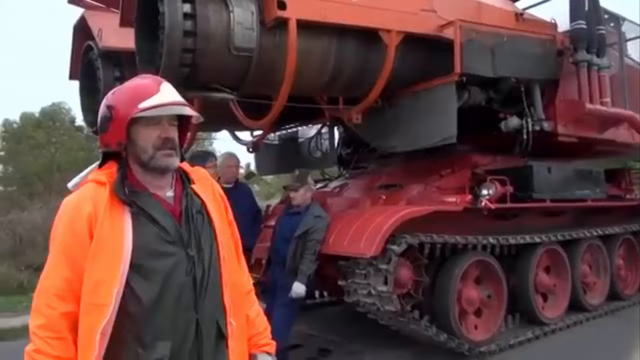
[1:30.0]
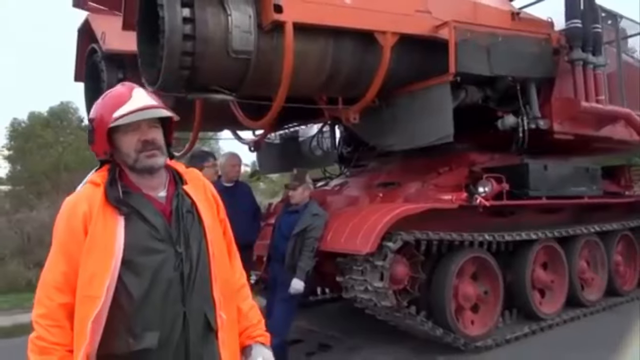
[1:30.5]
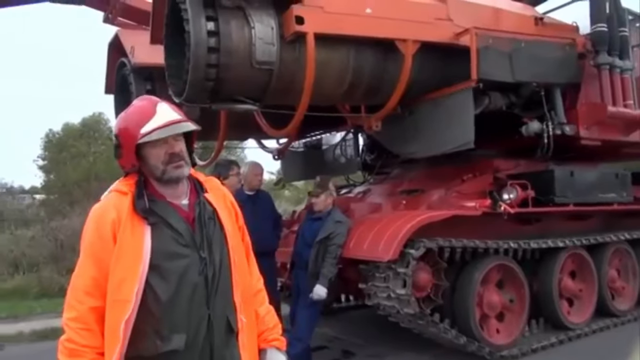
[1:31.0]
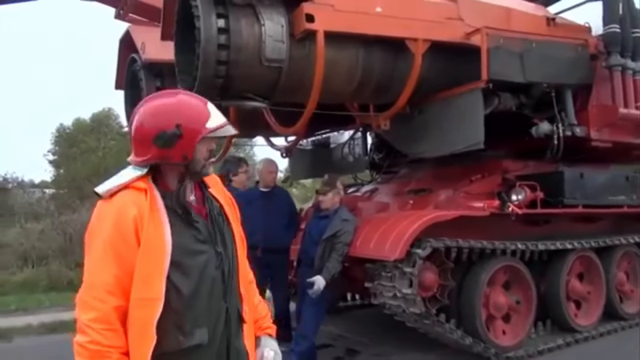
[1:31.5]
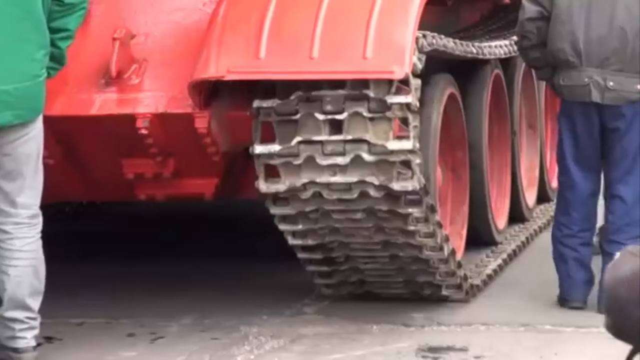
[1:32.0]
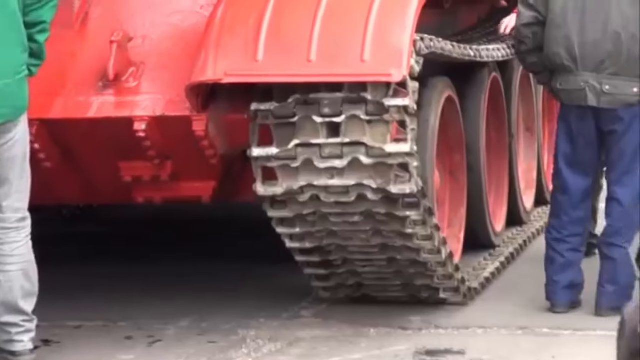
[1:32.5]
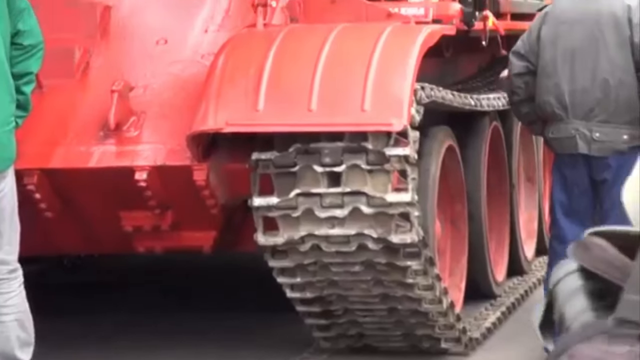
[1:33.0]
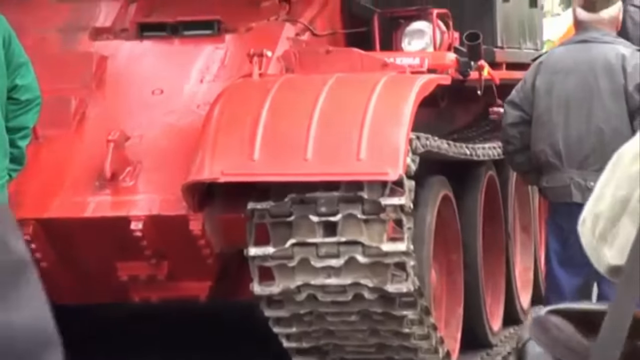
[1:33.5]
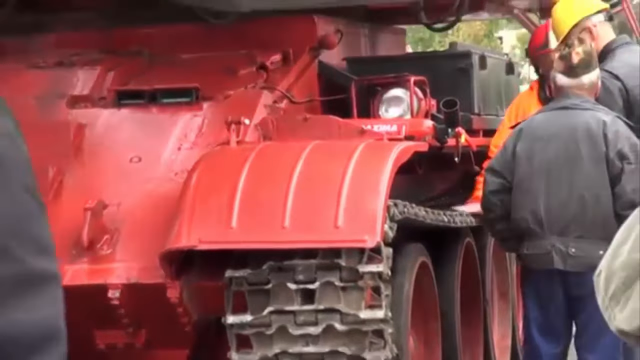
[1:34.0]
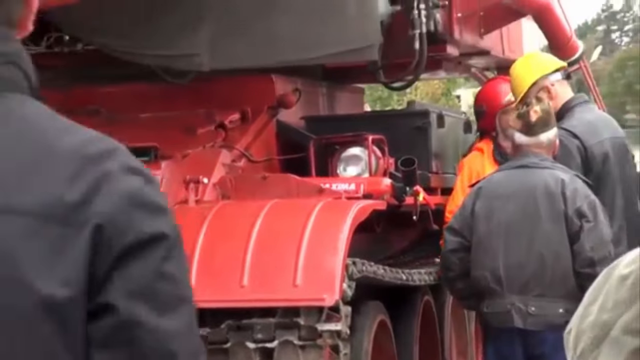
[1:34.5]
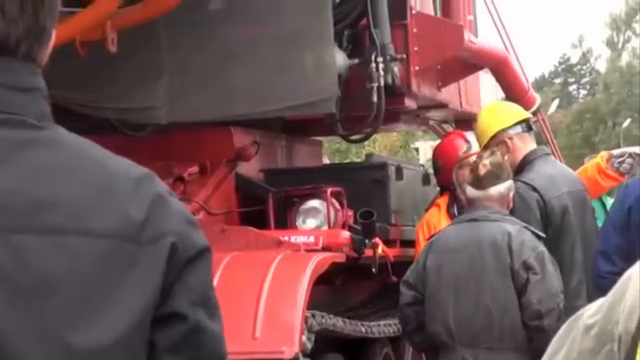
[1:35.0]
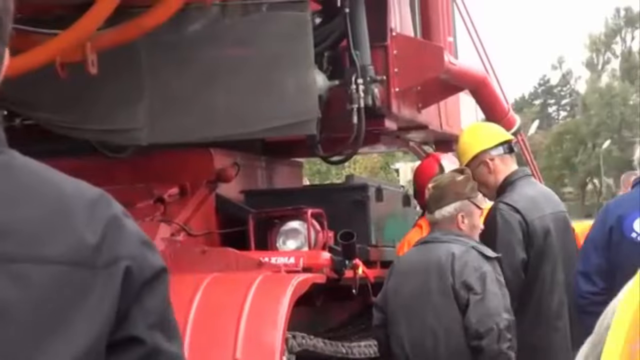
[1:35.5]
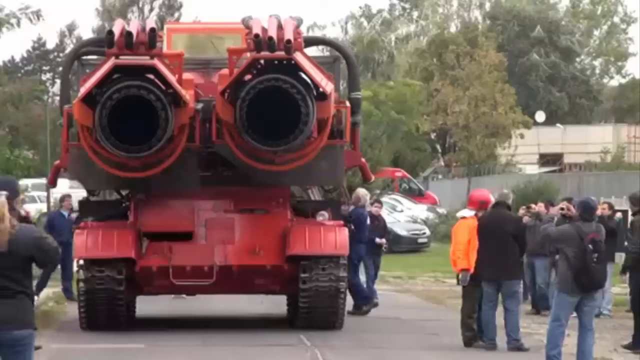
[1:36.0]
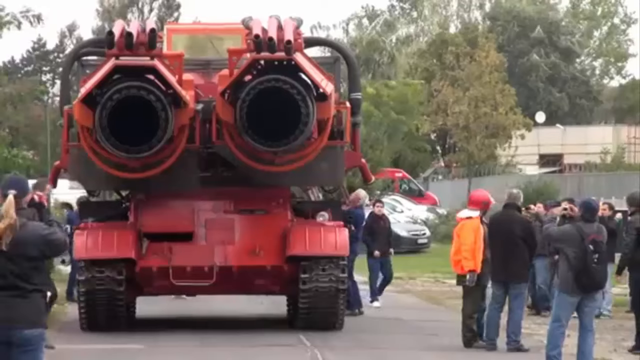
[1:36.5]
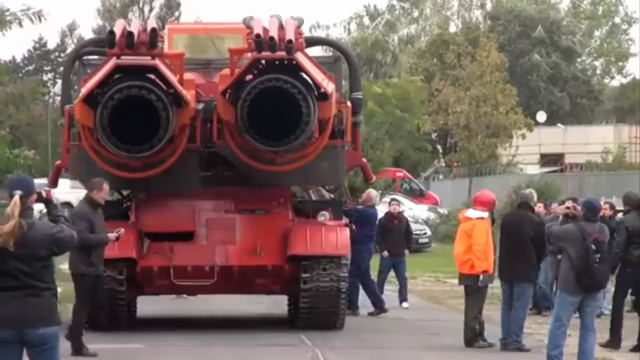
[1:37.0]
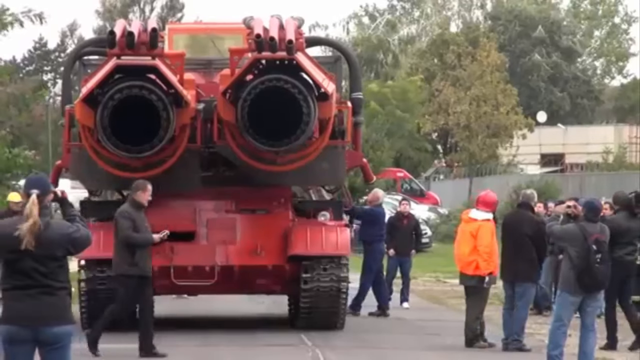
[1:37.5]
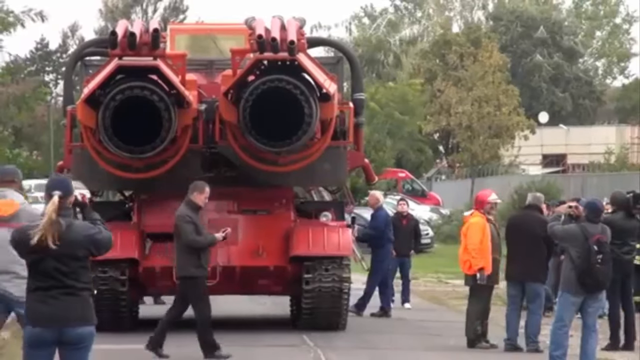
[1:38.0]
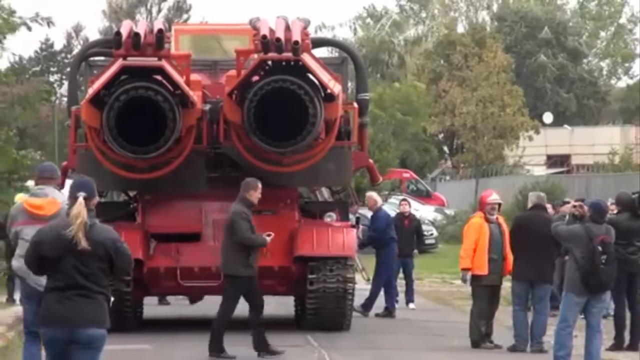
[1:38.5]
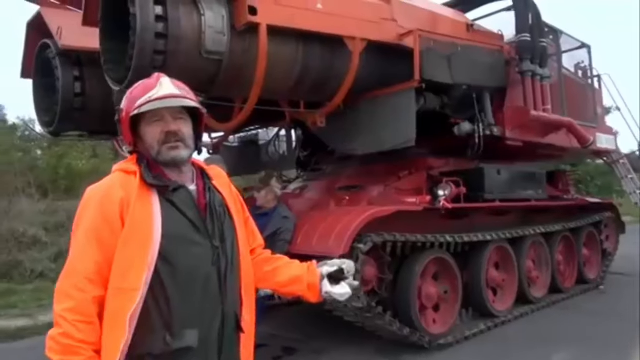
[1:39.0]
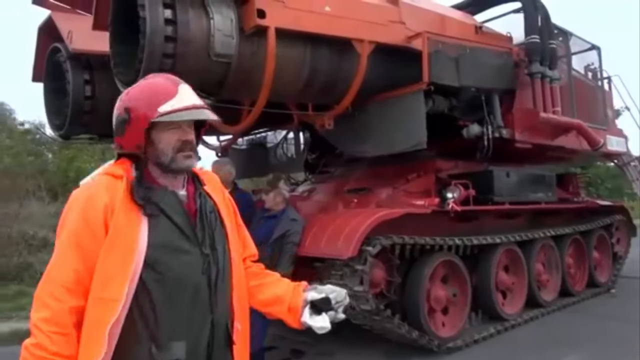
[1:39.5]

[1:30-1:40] There are a lot of people, and some of them are maintaining the firefighting vehicles. One seems to be a tank or something similar, with a water canal visible, maybe one from which a lot of water can be fired at the same time. It is huge.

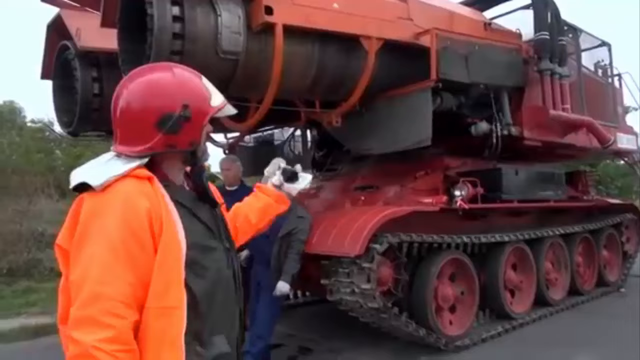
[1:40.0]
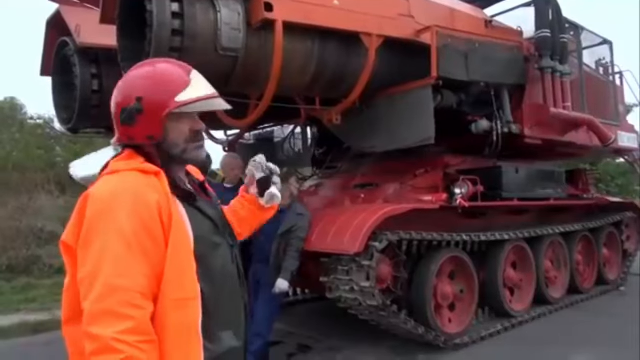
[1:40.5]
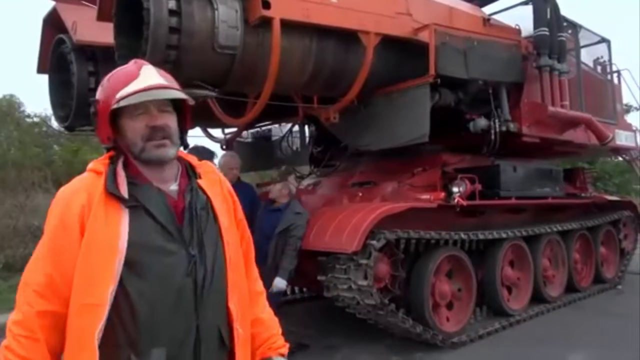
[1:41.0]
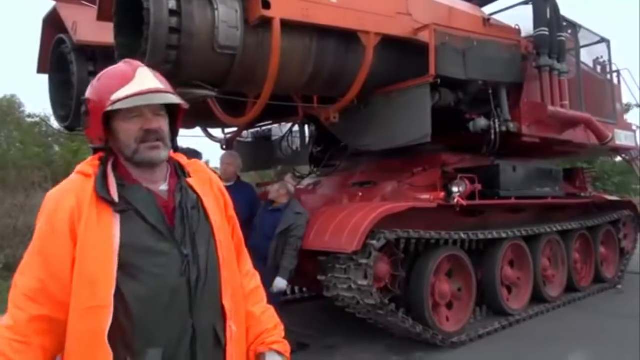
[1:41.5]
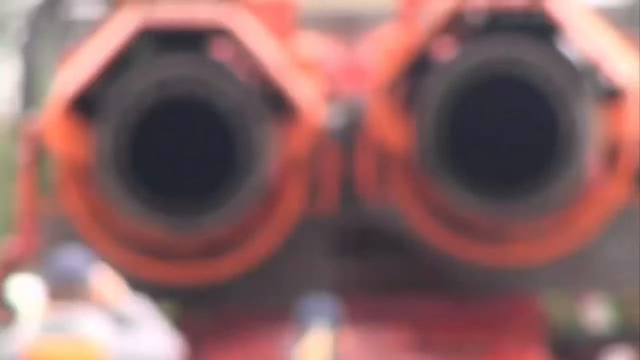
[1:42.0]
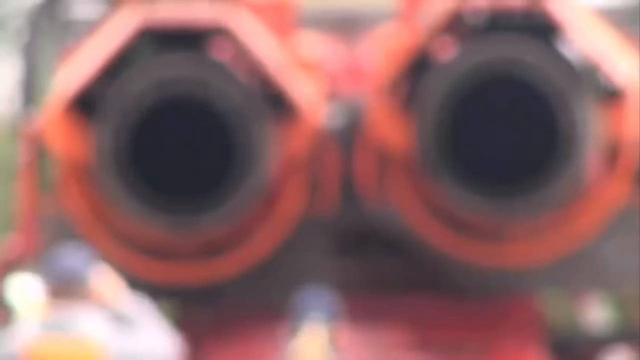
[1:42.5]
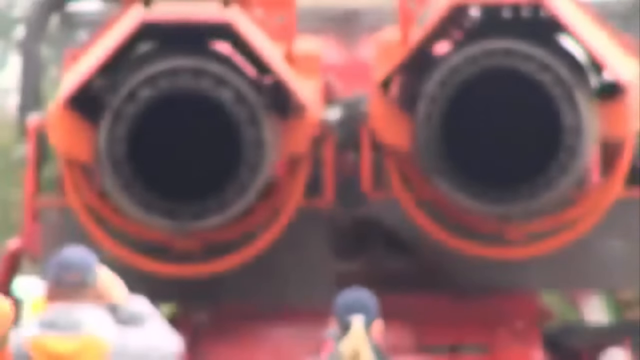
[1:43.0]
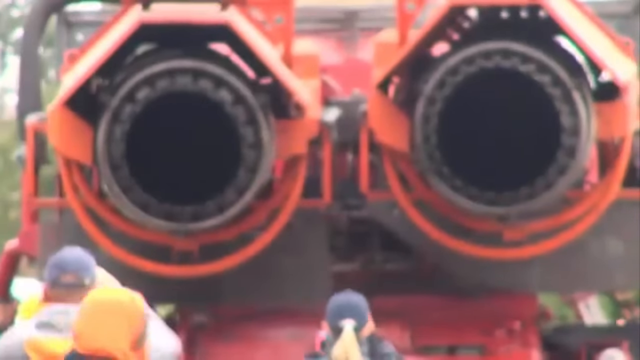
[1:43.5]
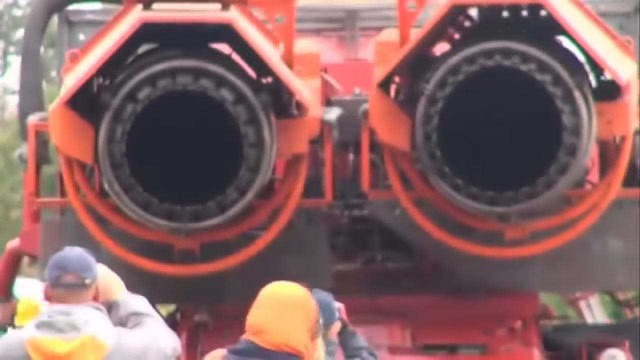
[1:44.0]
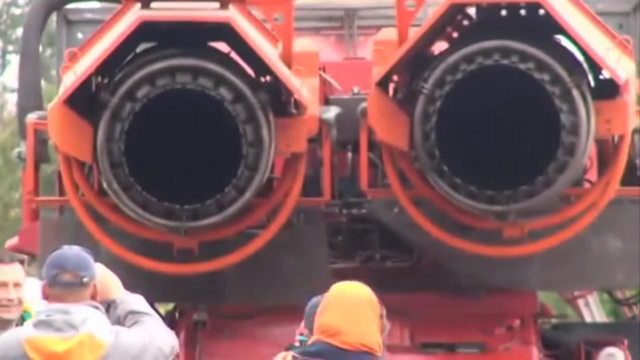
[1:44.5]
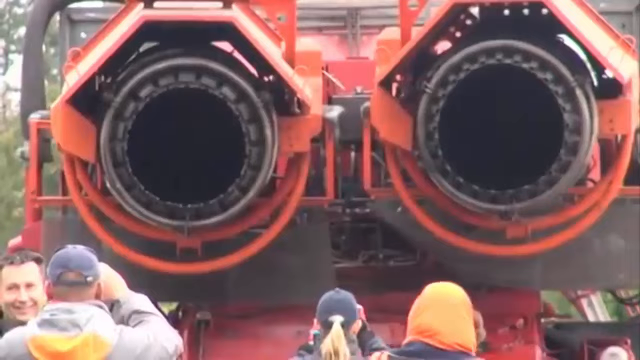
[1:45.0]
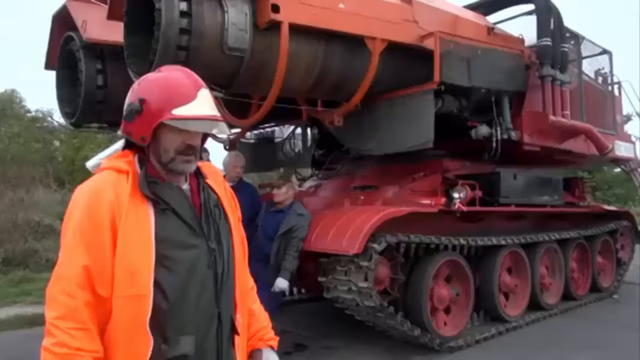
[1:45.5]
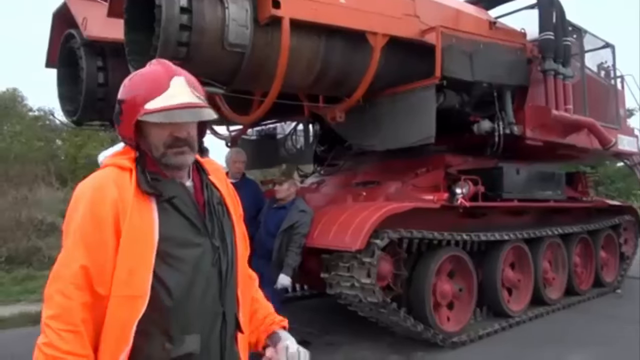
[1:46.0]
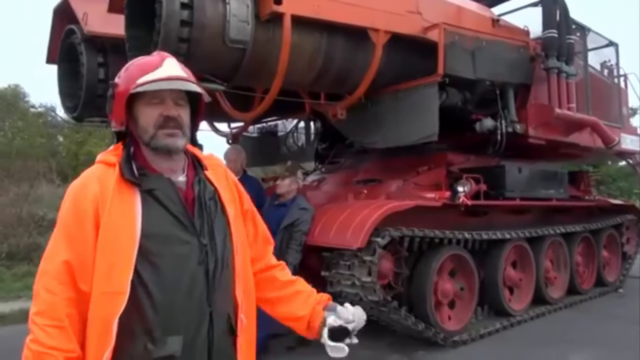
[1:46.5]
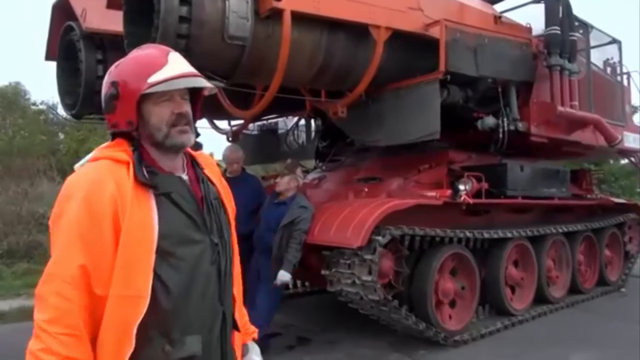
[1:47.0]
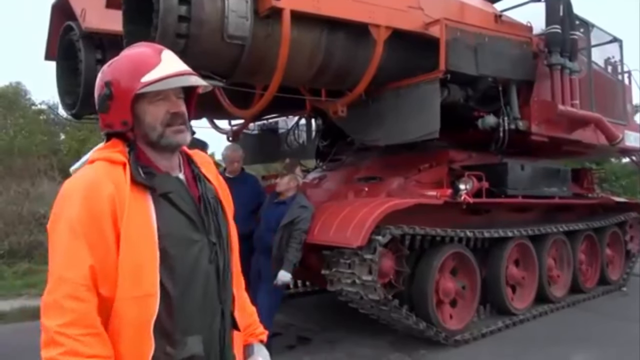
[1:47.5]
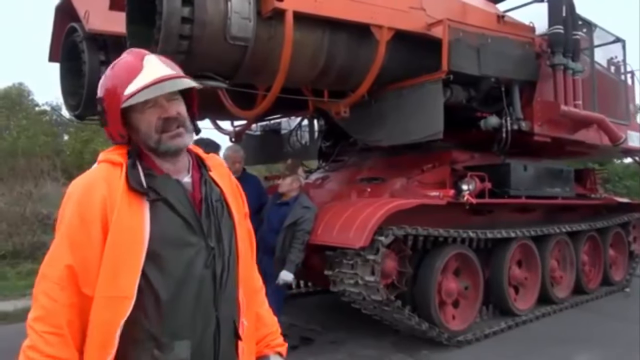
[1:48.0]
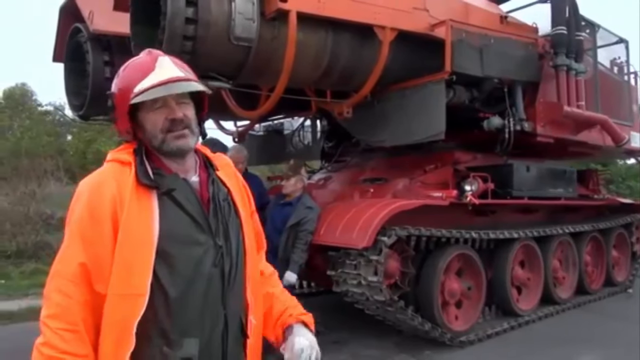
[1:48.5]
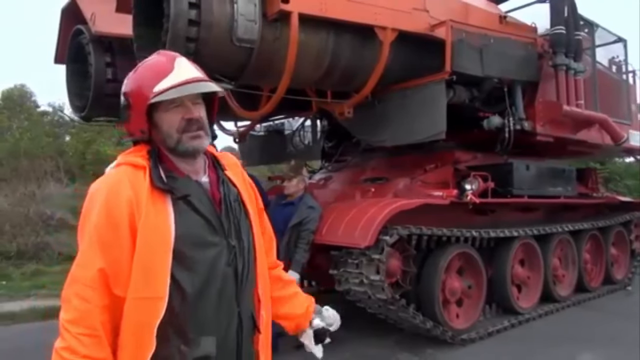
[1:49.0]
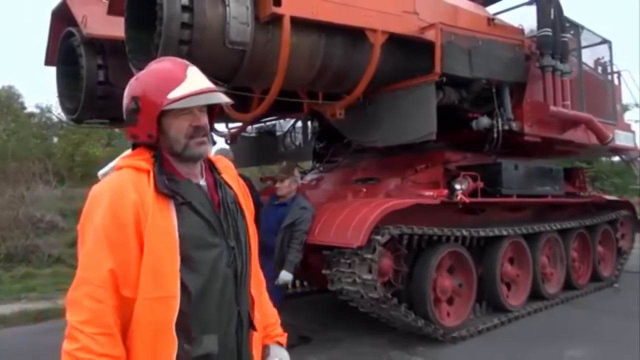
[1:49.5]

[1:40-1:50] Very large vehicles appear, seemingly used in firefighting situations. They are huge machines.